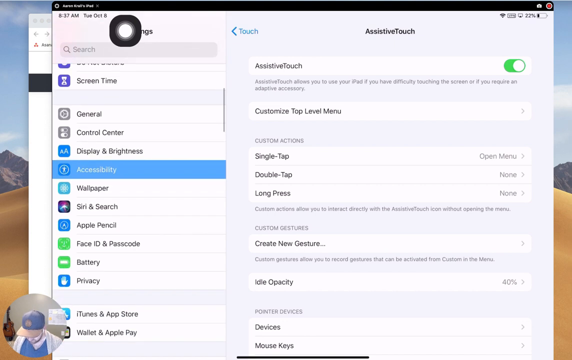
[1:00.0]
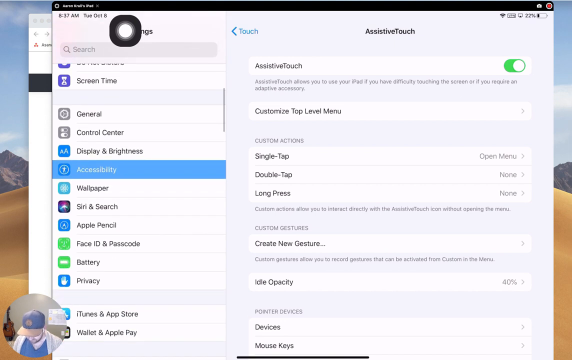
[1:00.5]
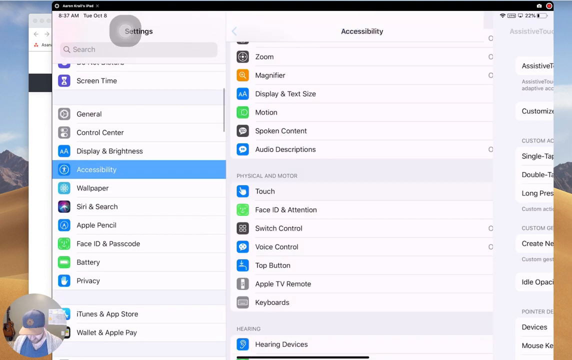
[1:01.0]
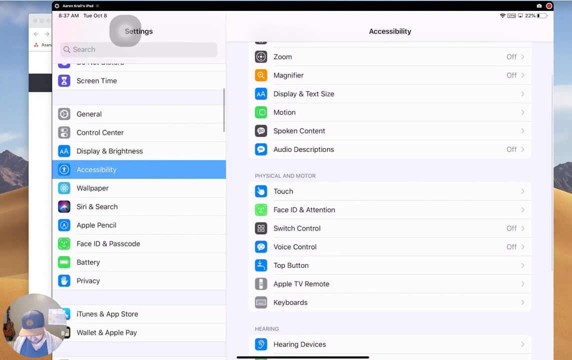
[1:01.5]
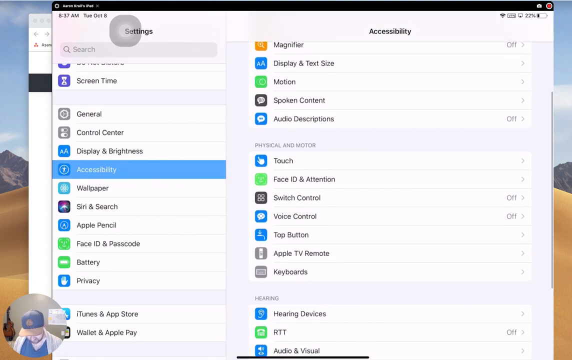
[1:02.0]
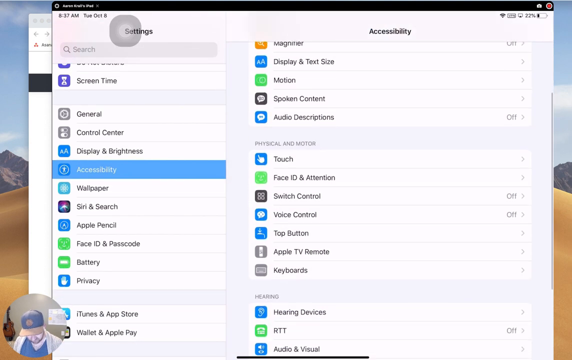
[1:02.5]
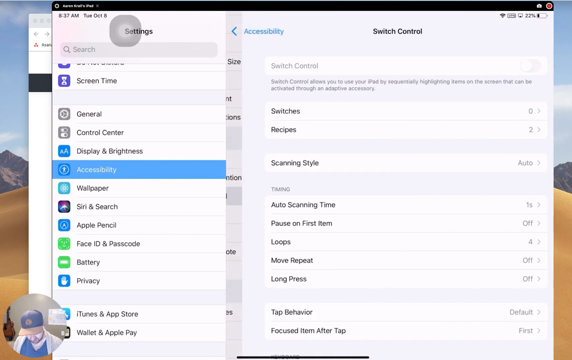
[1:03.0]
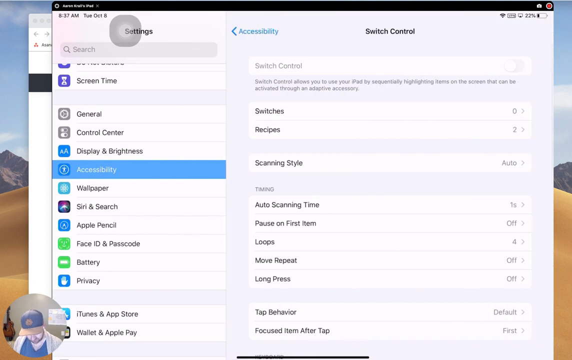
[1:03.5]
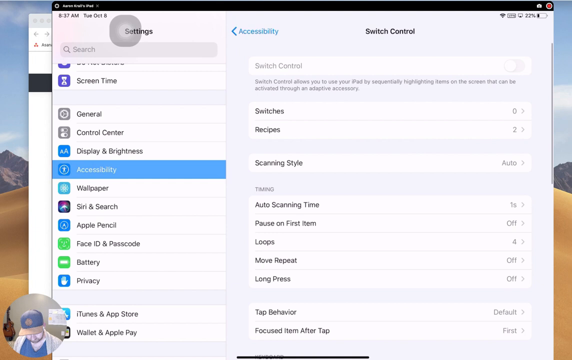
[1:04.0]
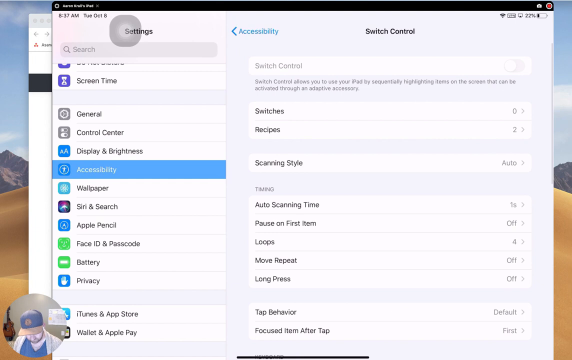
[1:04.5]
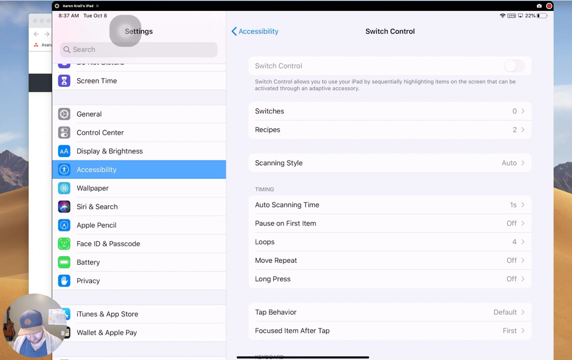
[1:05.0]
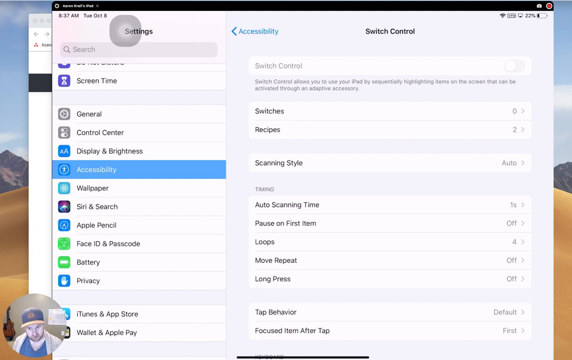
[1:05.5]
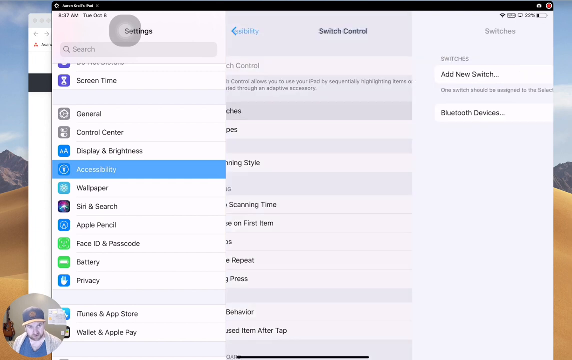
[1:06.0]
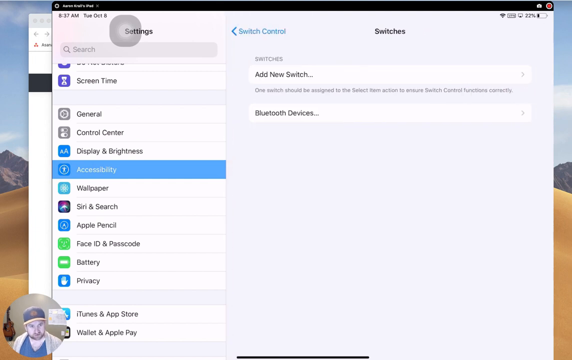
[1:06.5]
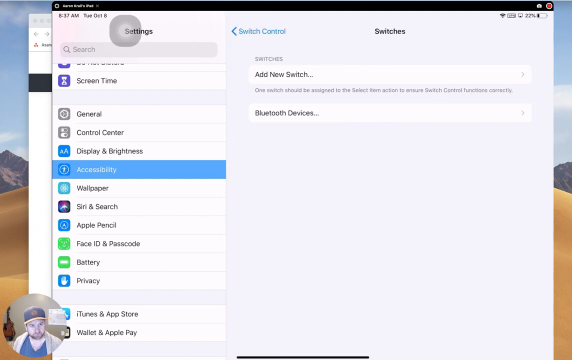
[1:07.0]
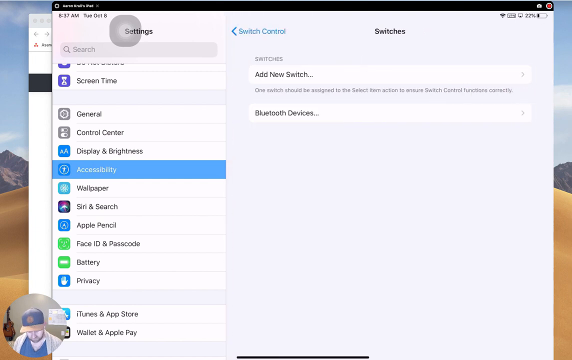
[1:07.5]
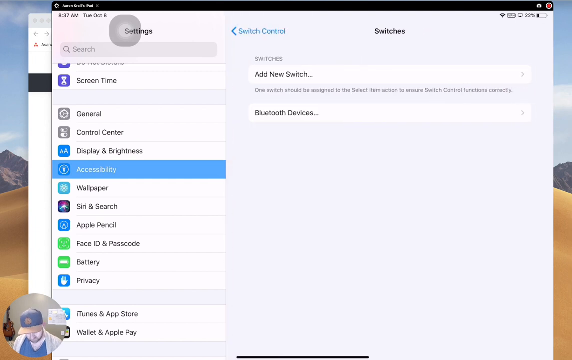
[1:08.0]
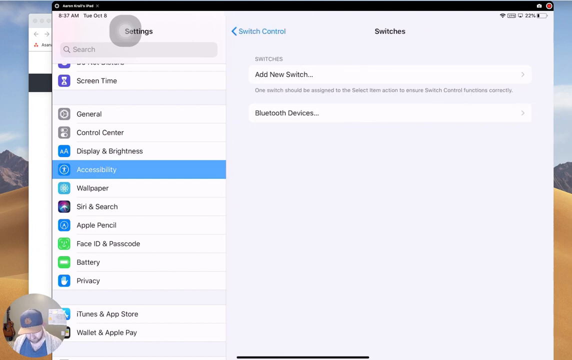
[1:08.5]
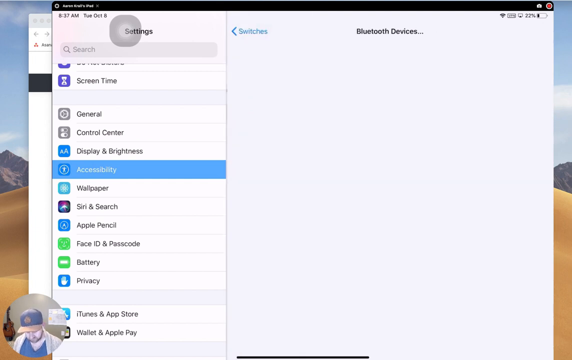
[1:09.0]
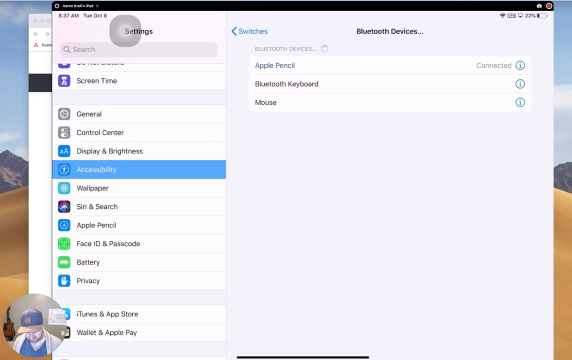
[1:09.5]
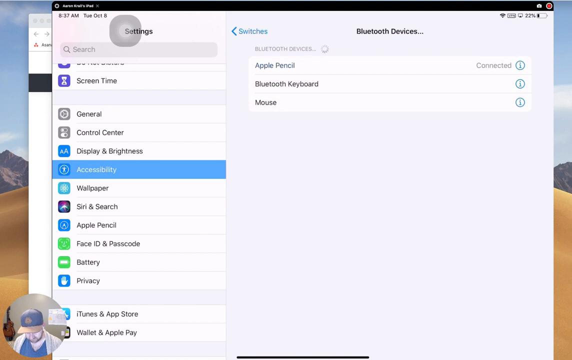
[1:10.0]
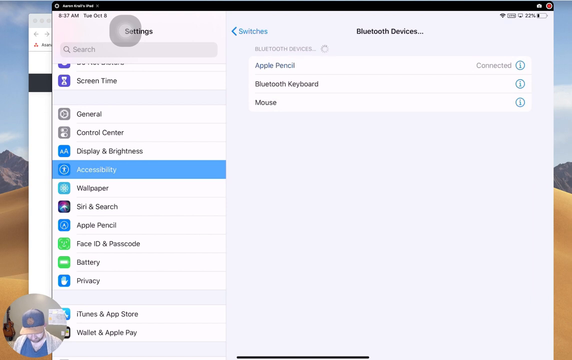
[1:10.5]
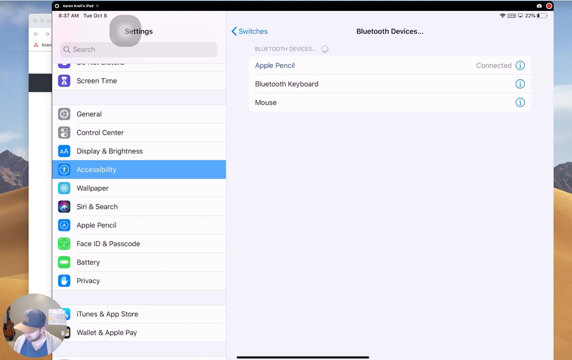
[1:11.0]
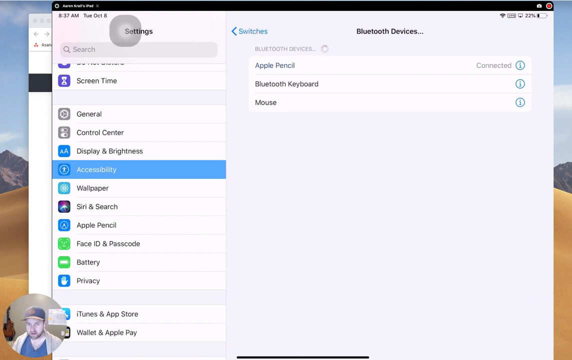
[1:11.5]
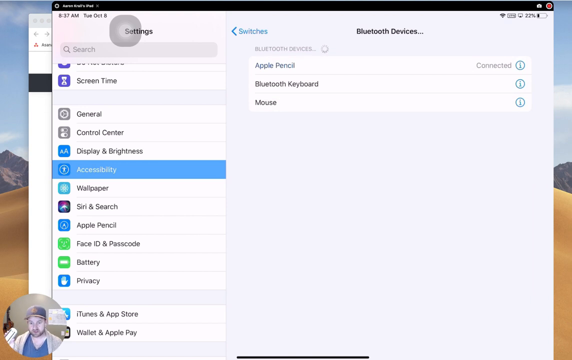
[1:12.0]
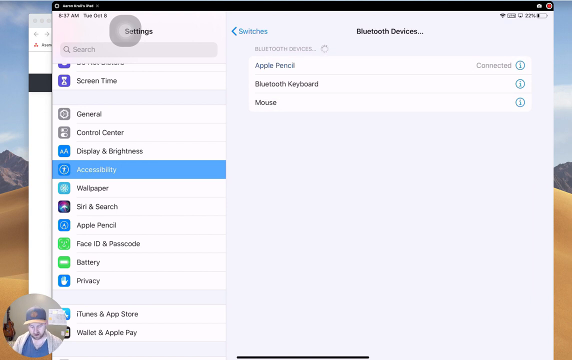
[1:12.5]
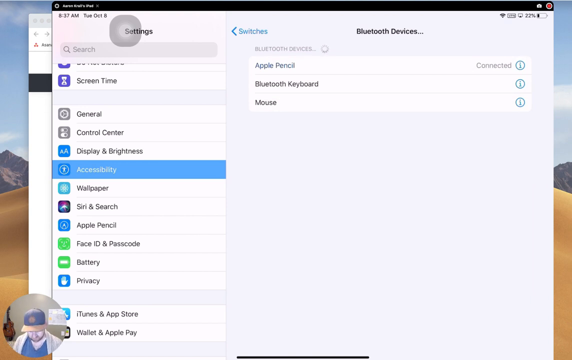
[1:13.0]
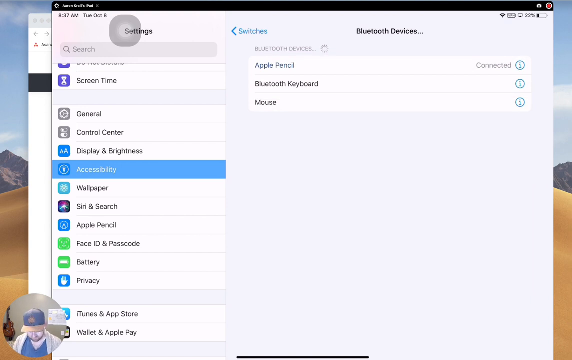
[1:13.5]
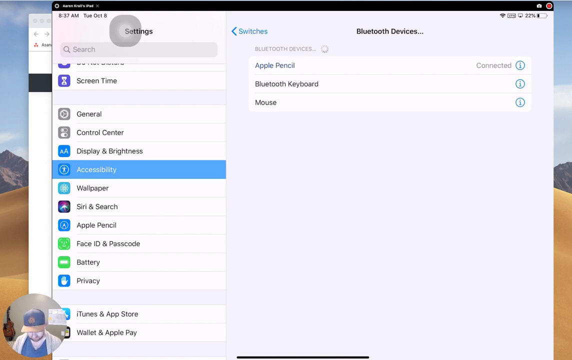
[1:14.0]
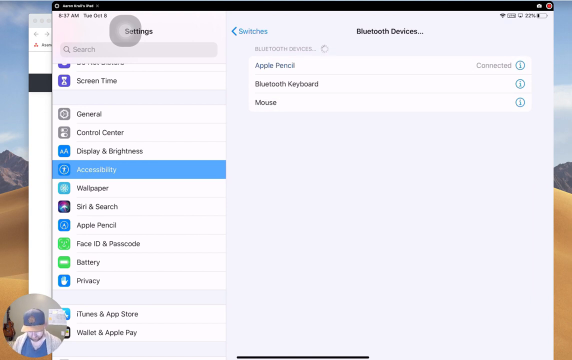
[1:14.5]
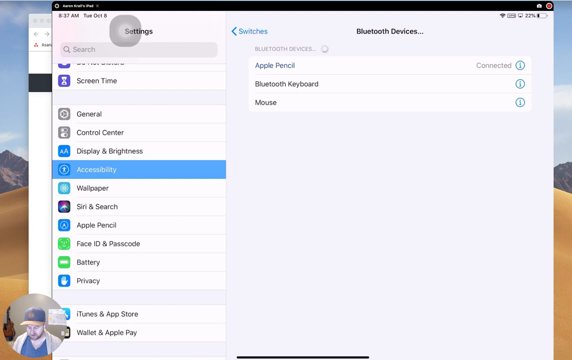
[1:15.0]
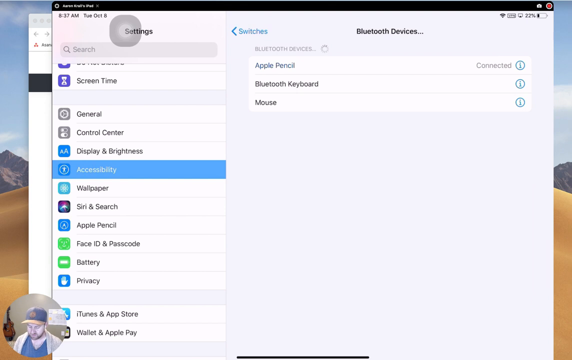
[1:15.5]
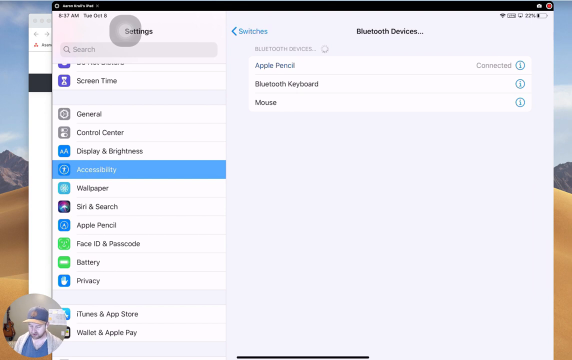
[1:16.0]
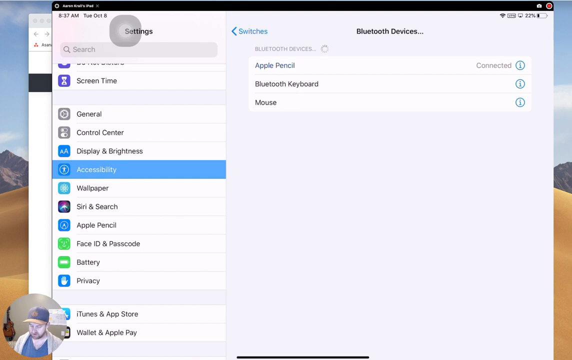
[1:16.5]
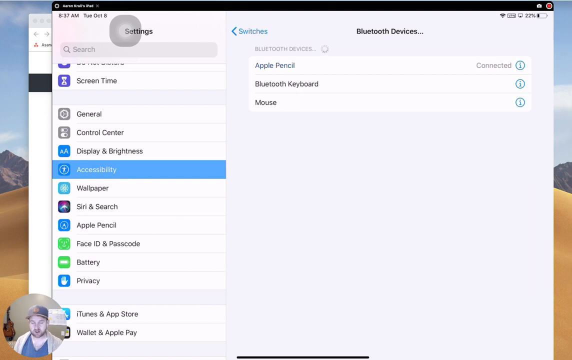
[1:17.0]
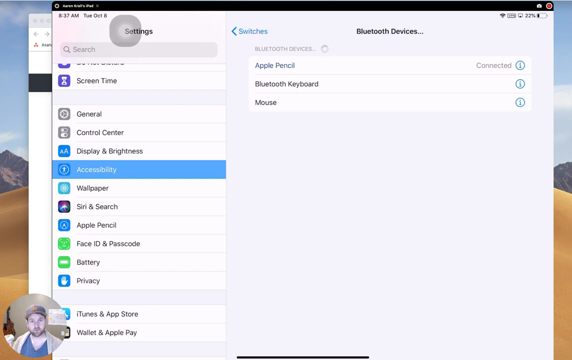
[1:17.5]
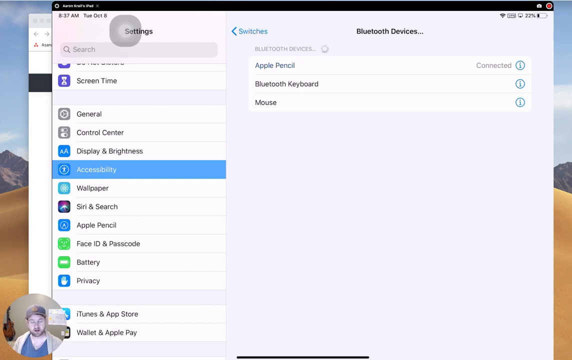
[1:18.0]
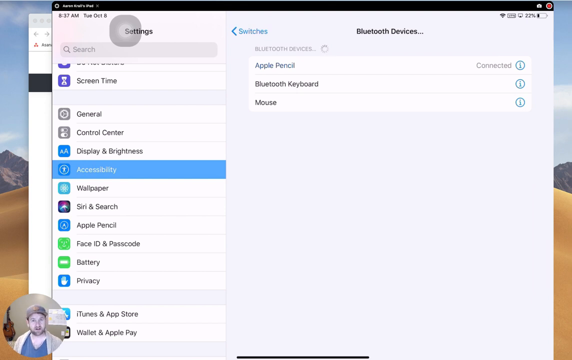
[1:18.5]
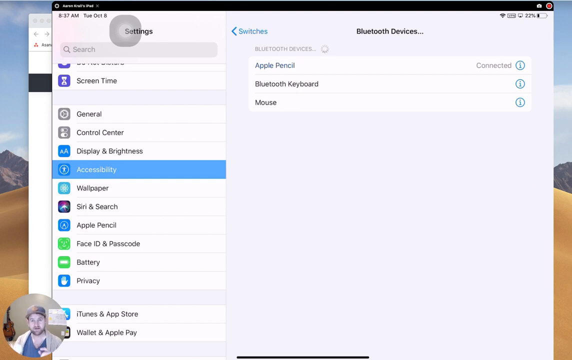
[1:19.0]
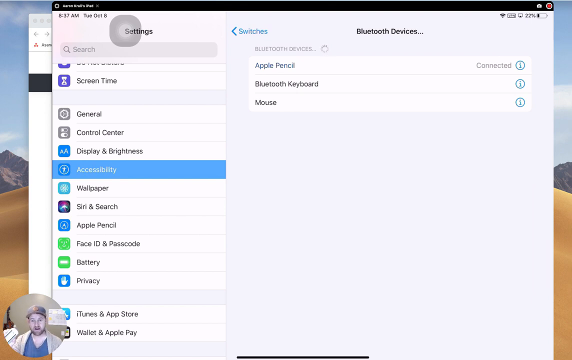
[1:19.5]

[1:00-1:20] On the screen is an accessibility tab, and he scrolls through switches. He clicks on switches and then on Bluetooth devices, which lists an Apple Pencil, a Bluetooth keyboard and a mouse, shown as connected to the computer. He then goes back to accessibility to show a range of options, including single tap, double tap, long press and others.